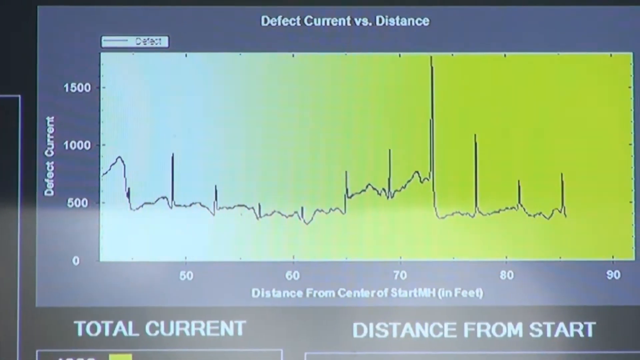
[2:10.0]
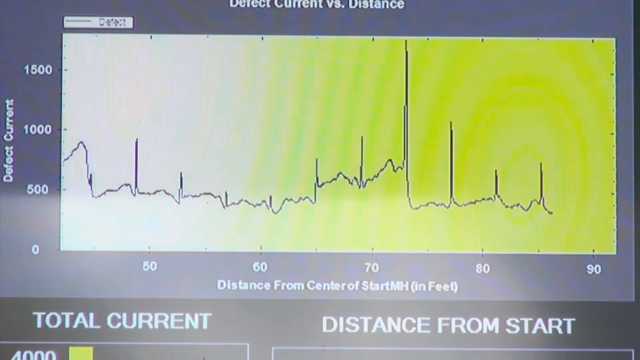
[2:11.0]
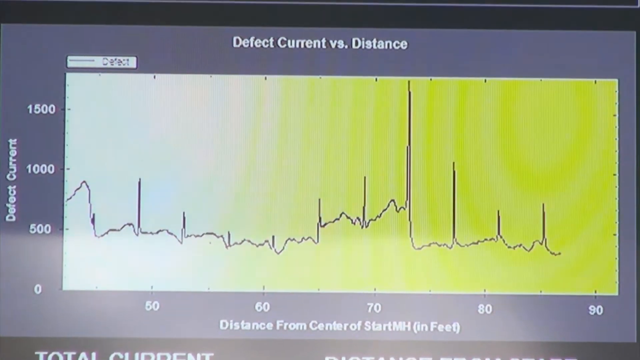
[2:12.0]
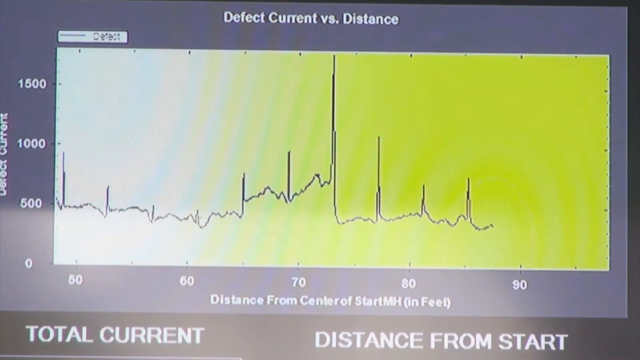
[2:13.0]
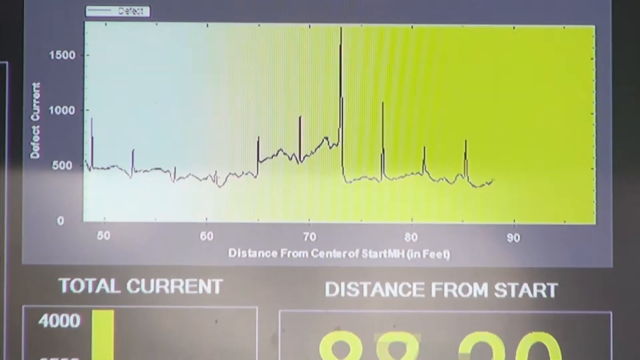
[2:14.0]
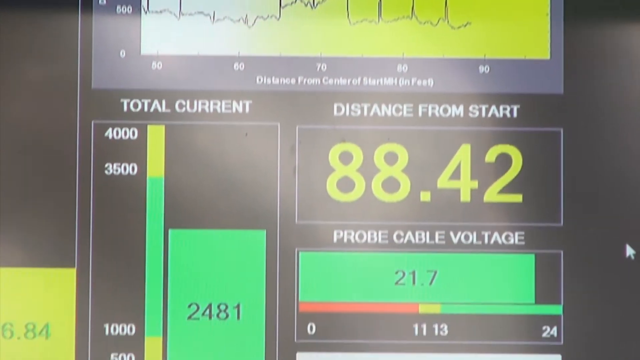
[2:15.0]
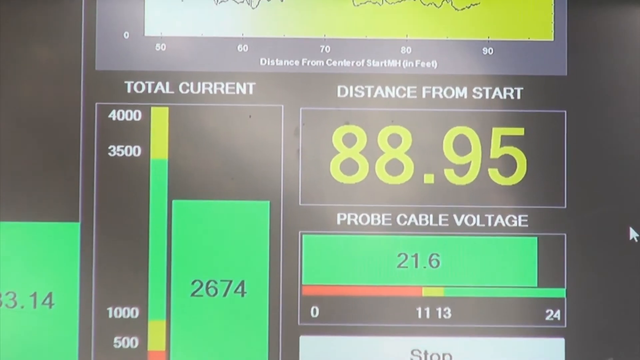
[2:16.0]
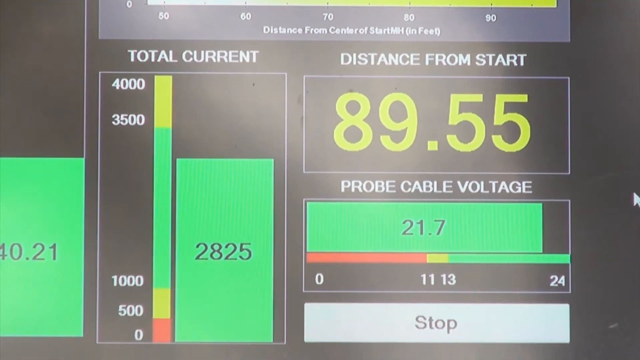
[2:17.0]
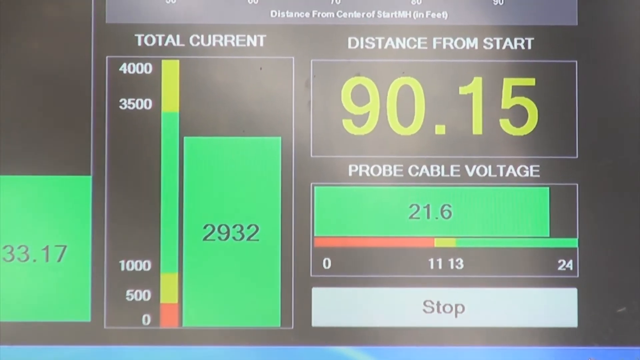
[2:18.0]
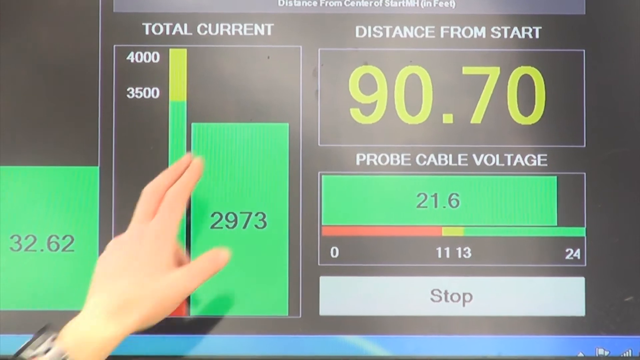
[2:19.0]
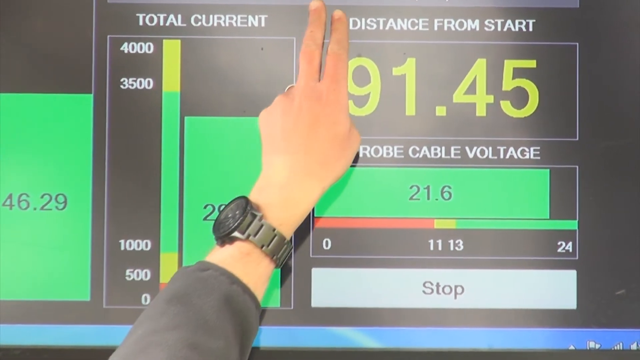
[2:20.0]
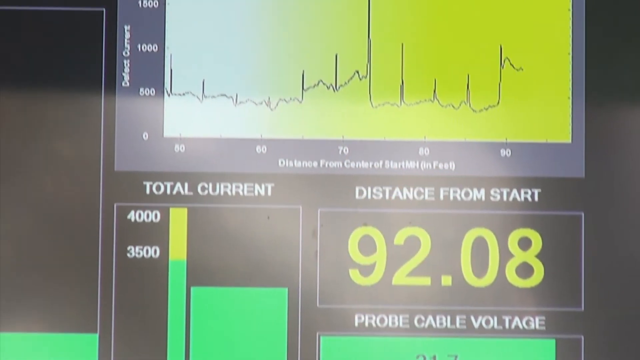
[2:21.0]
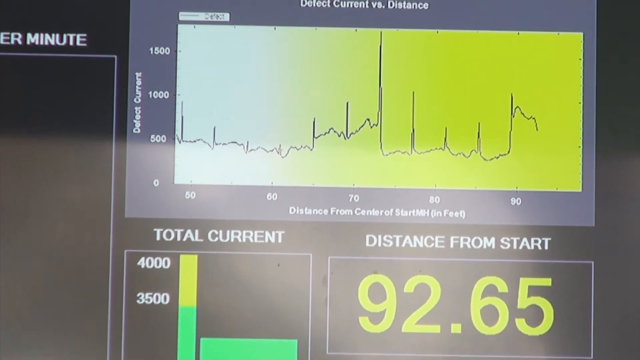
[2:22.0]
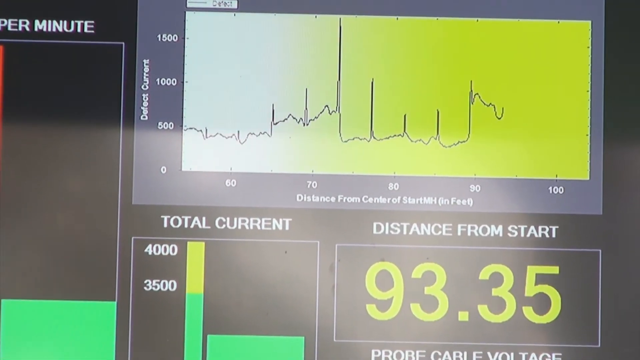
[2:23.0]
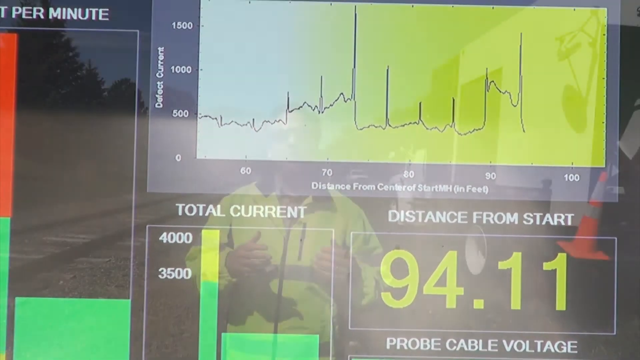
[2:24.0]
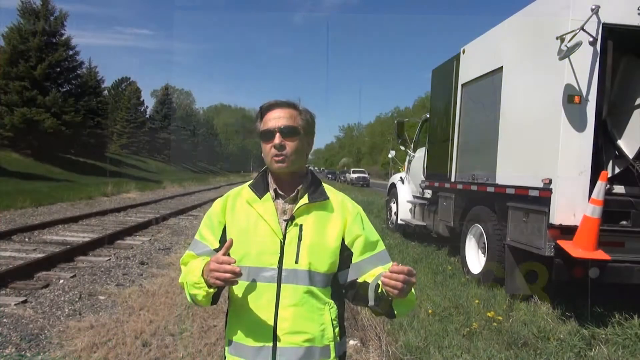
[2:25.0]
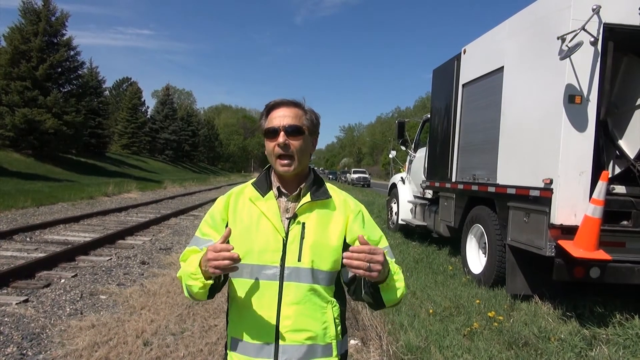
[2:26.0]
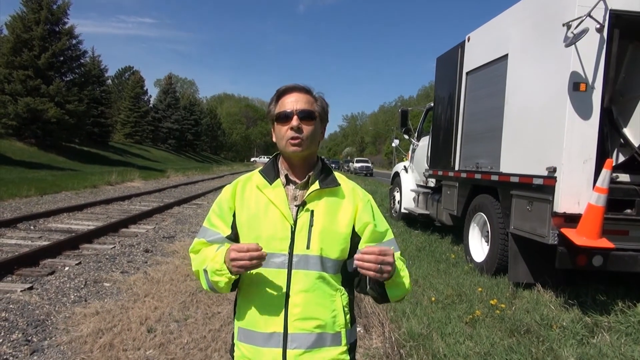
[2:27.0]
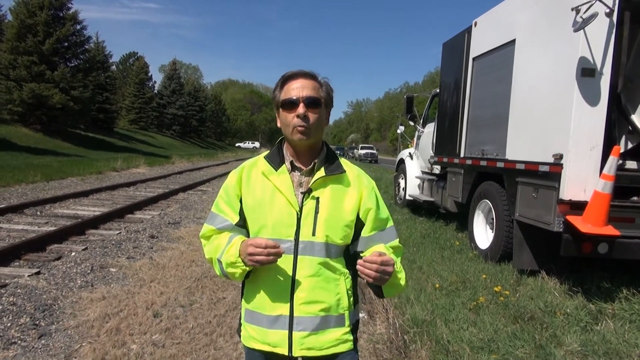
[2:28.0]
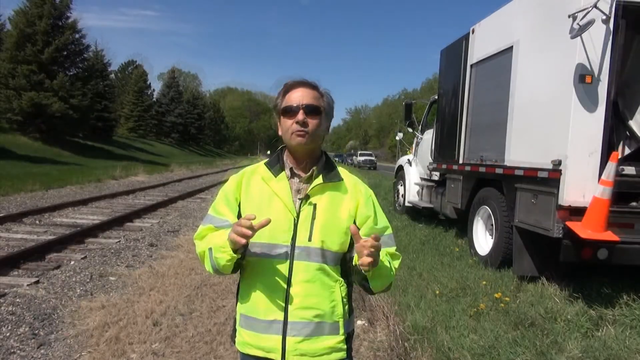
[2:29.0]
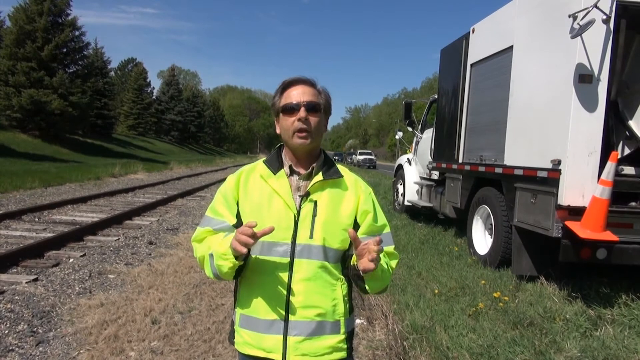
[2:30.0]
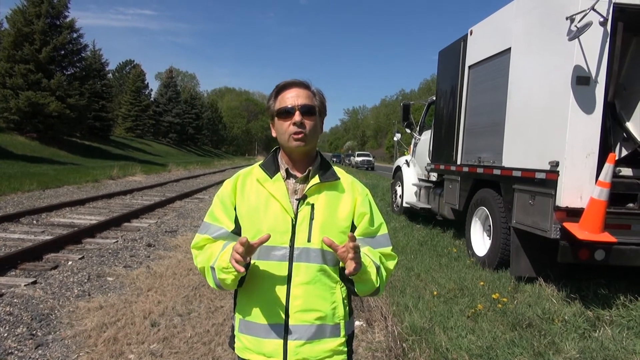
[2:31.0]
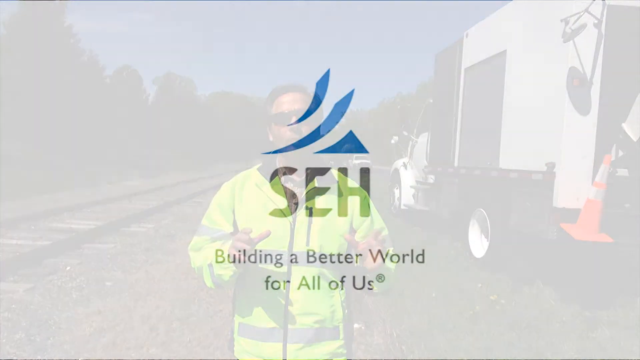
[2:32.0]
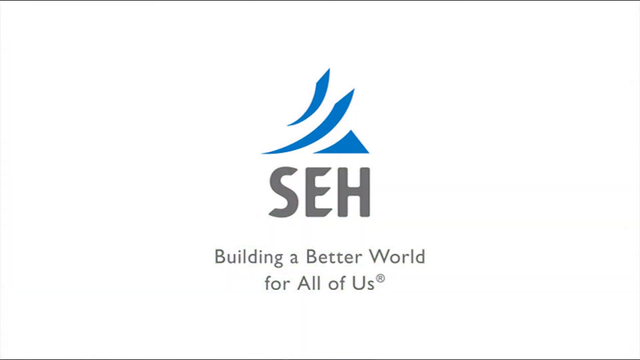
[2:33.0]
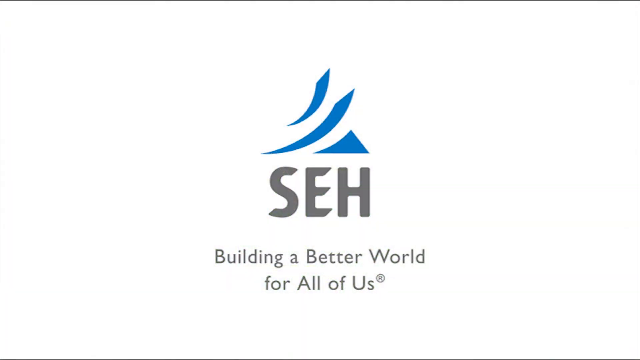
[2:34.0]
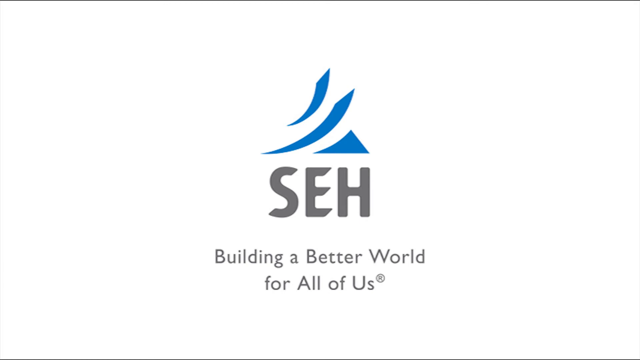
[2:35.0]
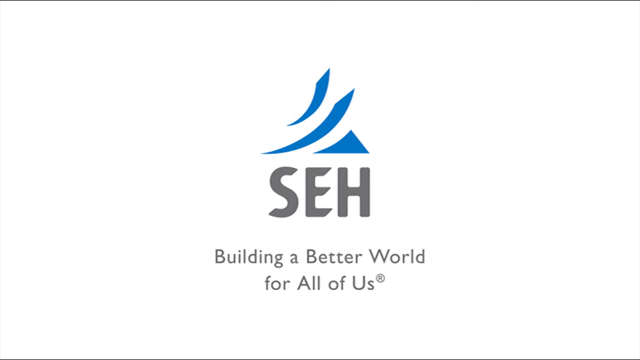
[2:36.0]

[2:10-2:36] A different part of the graph appears, labeled "defect current versus distance," showing the heartbeat-like spikes. The camera looks at it as Mr. Tracy apparently speaks. It shows distance from start as 90.15, probe cable voltage as 21.6, a current of 2932 and a max of 4,000. A hand points to the graphs; the person wears a watch, a gray shirt and a gray jacket, possibly charcoal-colored. The video returns to Mr. Tracy speaking under blue skies with green trees, with the large white truck carrying the machinery to dip things into the sewer and the computer equipment, and vehicles parked along the road behind him. He is along some railroad tracks, and a white SUV goes by crossing a road. At the end the screen shows "SDH building a better world for all of us."